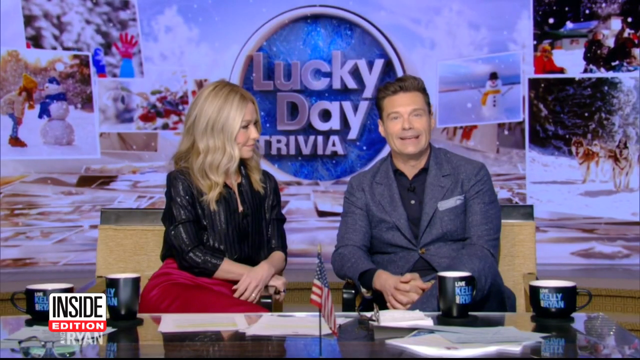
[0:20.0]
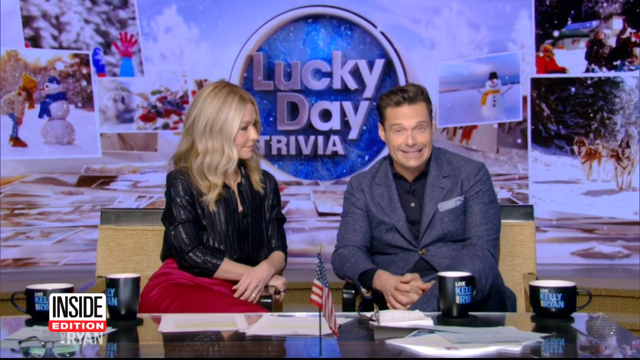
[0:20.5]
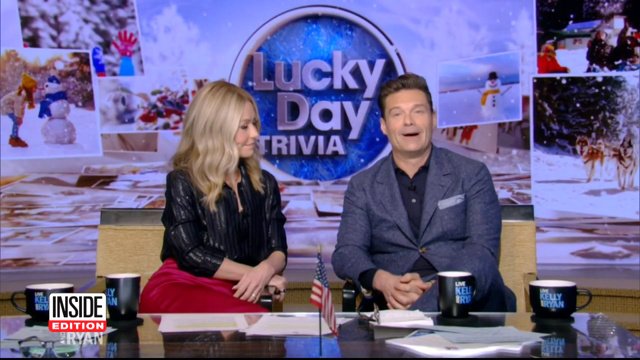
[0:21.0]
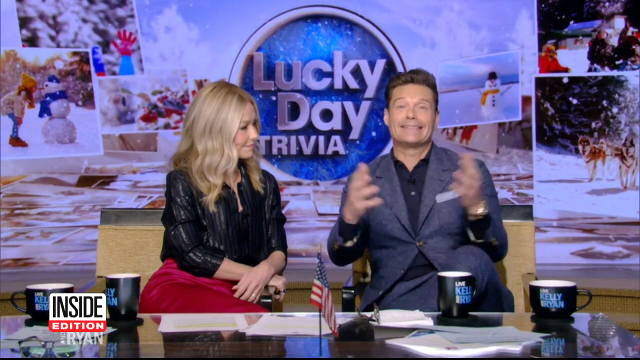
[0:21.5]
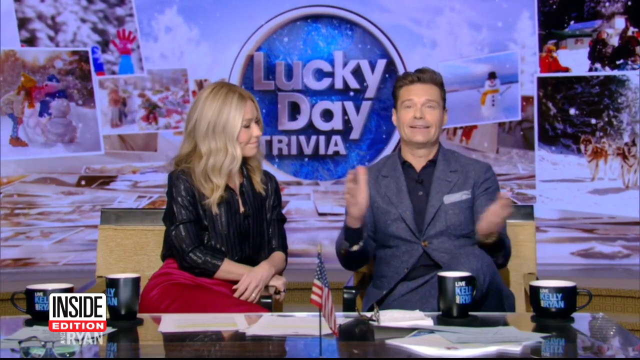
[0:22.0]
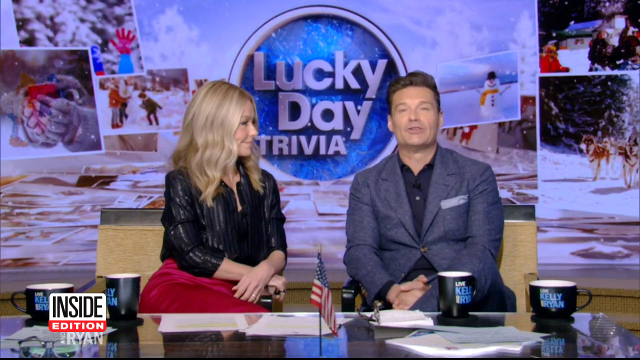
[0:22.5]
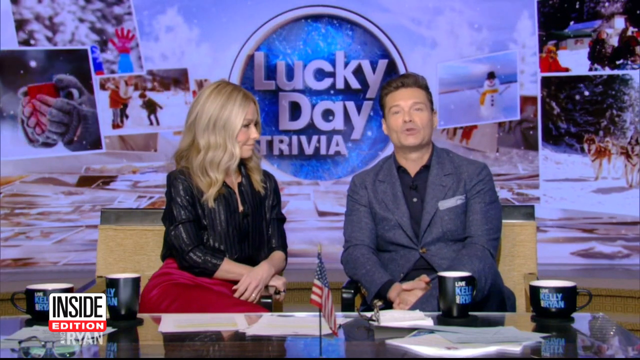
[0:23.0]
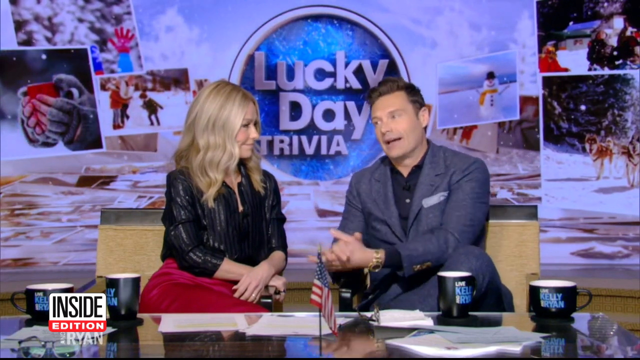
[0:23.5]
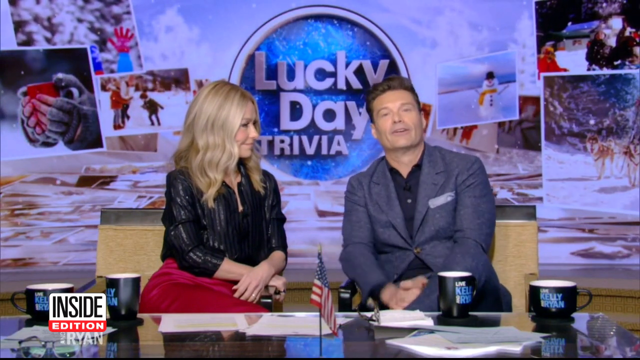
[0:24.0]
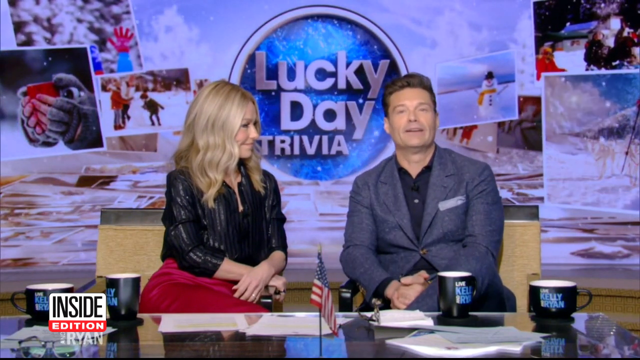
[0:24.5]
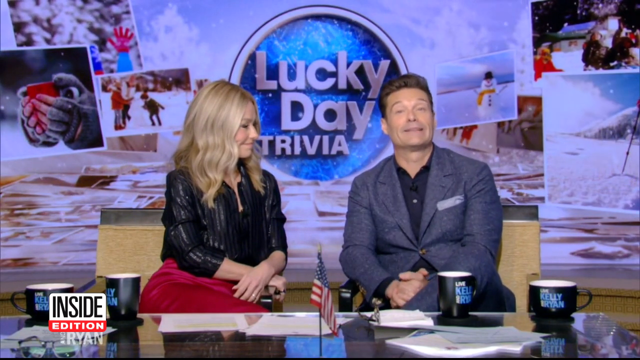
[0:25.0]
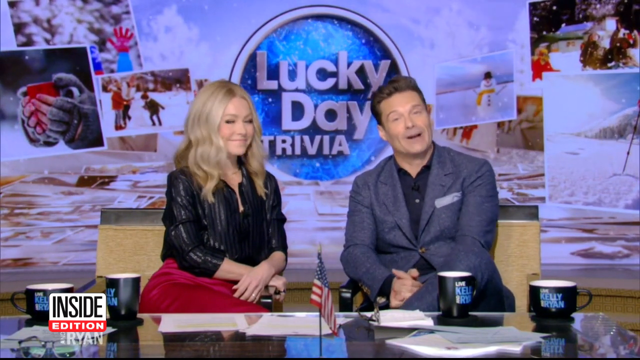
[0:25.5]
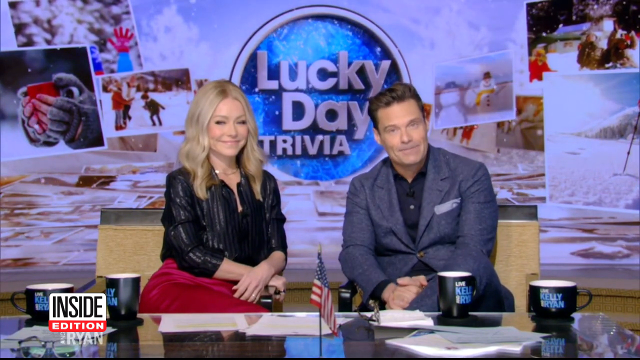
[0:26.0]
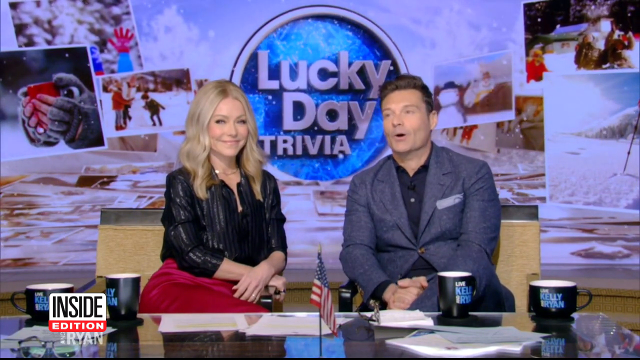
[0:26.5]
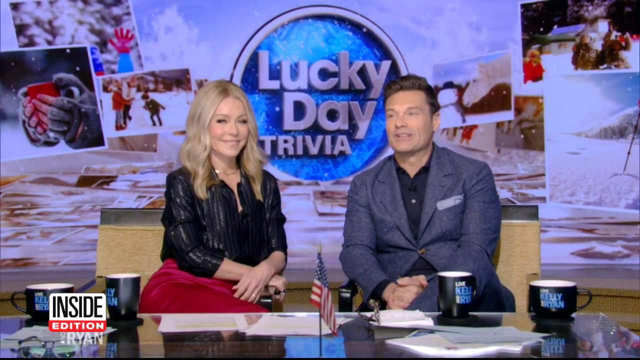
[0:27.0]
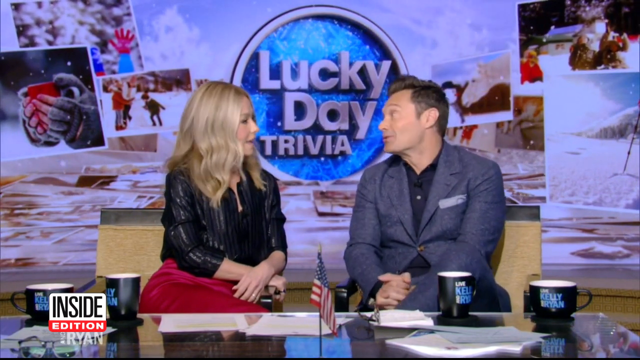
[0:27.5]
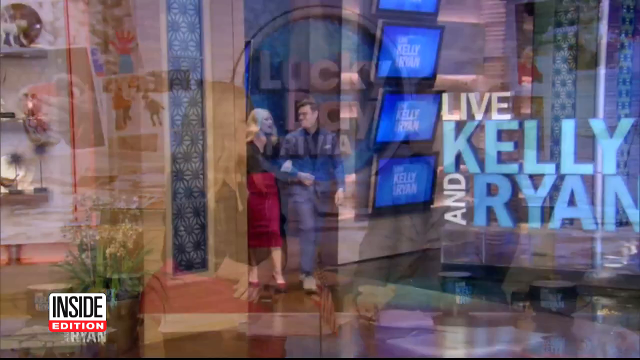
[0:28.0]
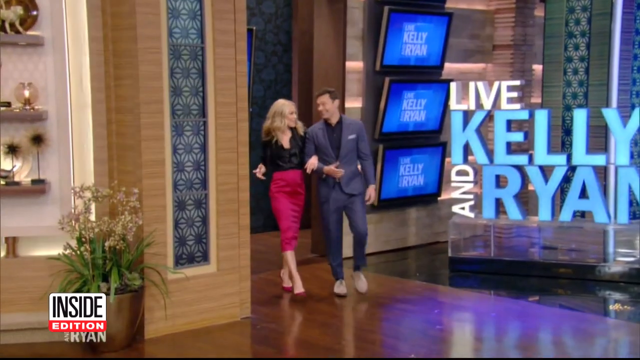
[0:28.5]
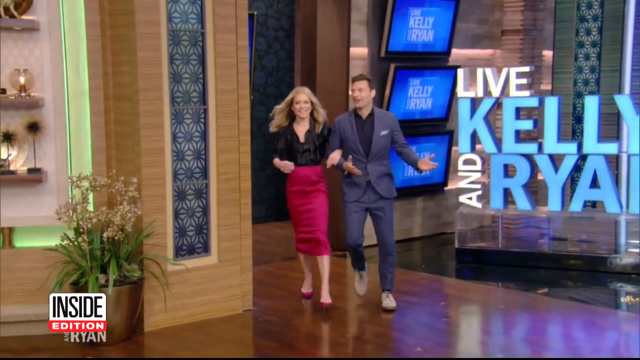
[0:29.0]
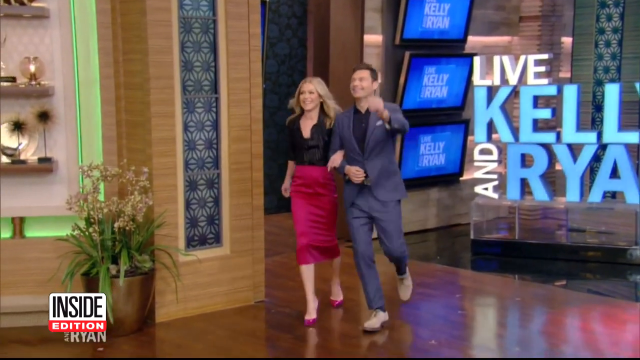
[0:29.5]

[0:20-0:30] Kelly Ripa and Ryan Seacrest sit on two chairs behind a long desk that has several mugs and several pieces of paper on it, with Kelly on the left side of the screen and Ryan on the right. Kelly wears a black sequin shirt and a pink skirt; Ryan wears a blue-gray suit with a dark blue-gray shirt underneath. They speak to one another as several photographs are displayed in the back of the screen. The video then cuts to the two of them walking out from backstage in the same outfits.